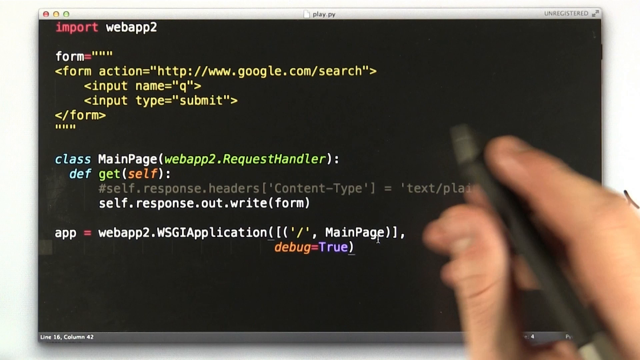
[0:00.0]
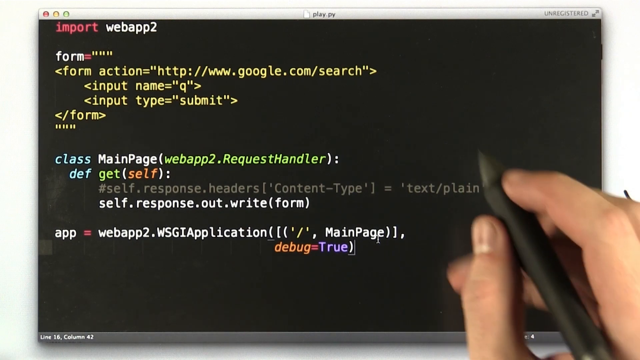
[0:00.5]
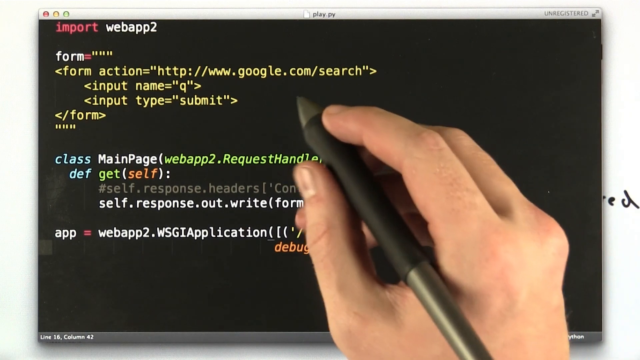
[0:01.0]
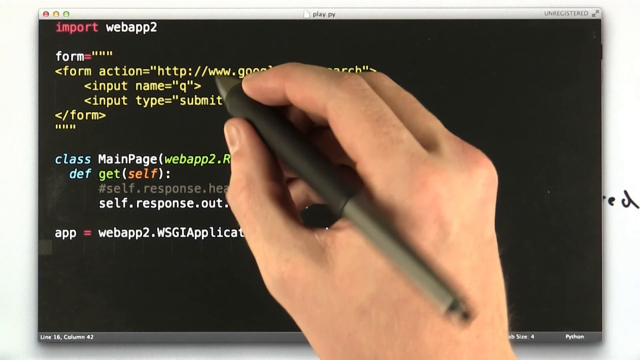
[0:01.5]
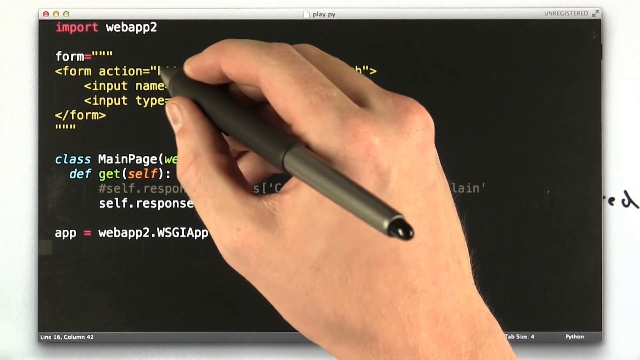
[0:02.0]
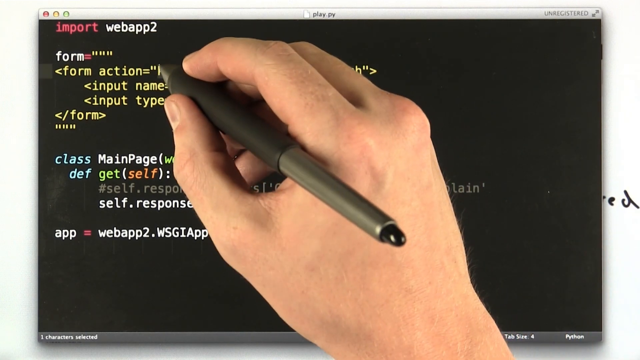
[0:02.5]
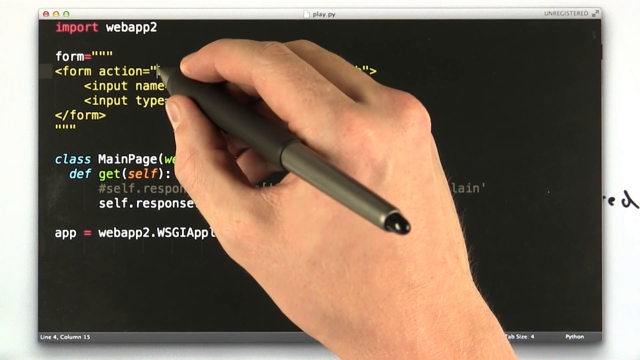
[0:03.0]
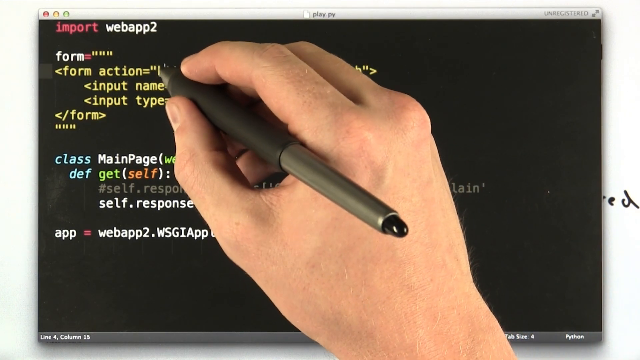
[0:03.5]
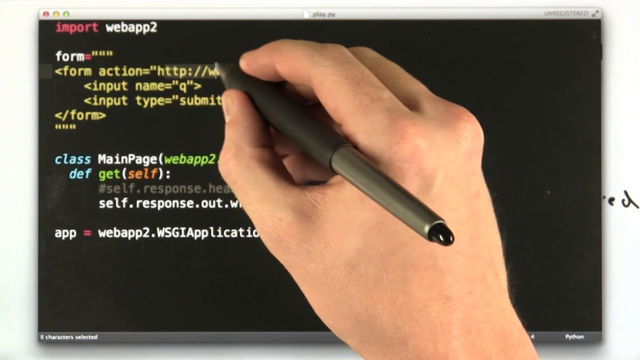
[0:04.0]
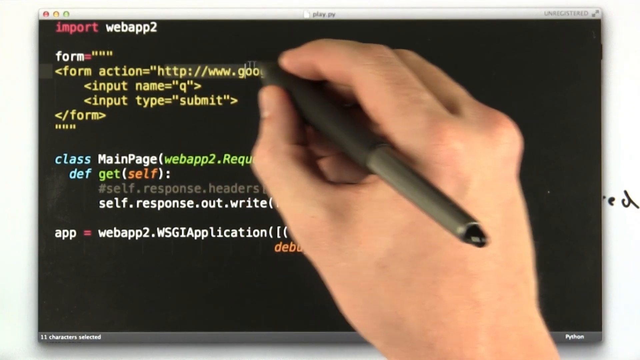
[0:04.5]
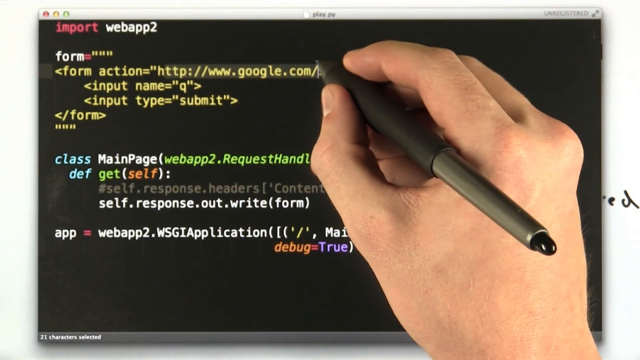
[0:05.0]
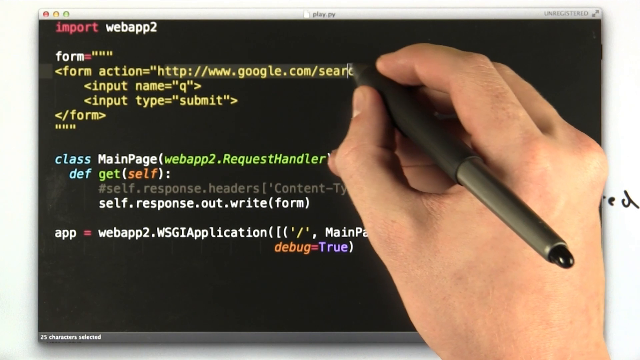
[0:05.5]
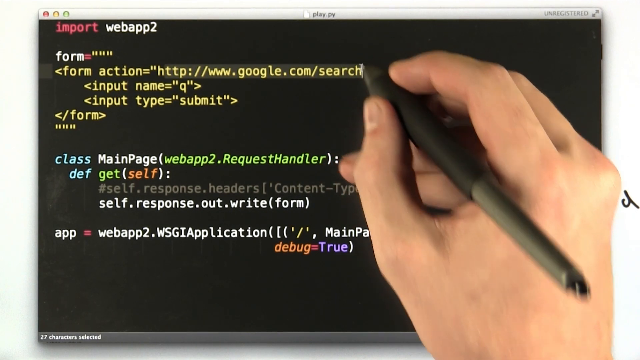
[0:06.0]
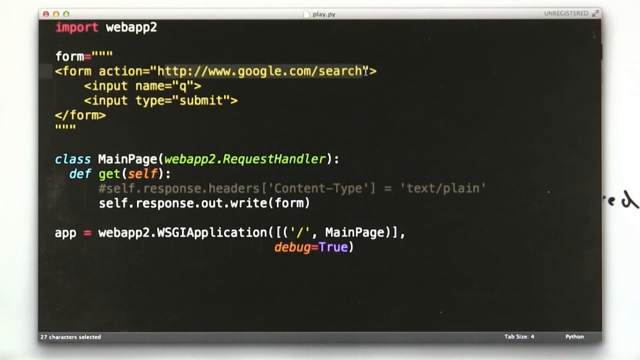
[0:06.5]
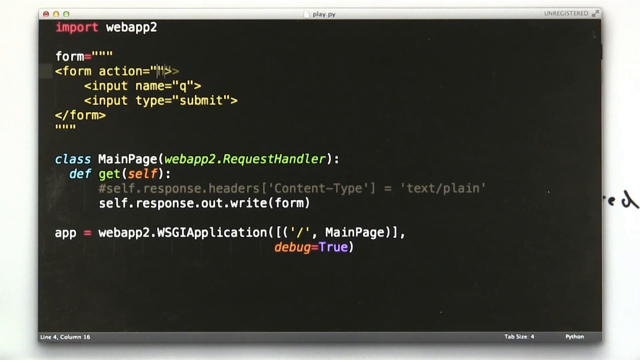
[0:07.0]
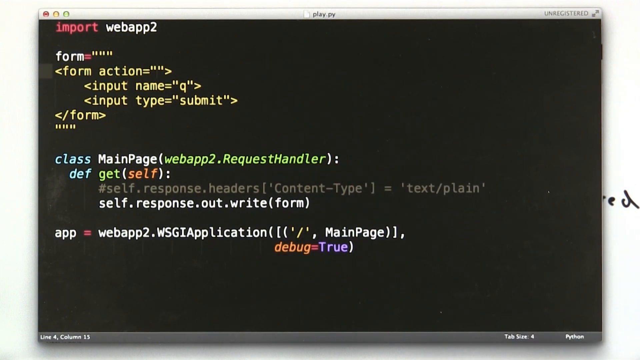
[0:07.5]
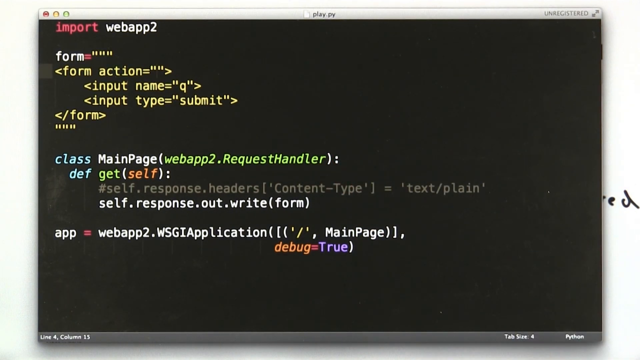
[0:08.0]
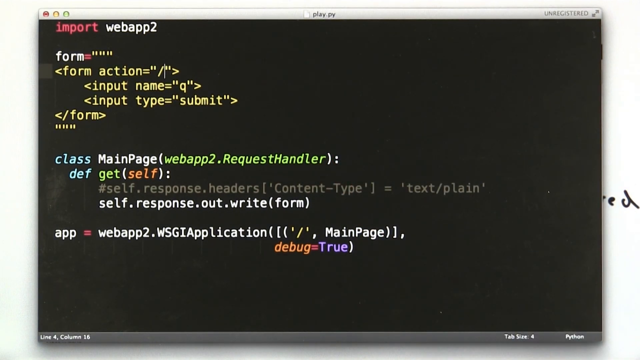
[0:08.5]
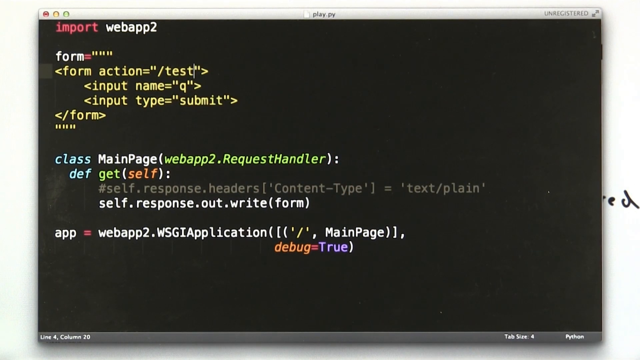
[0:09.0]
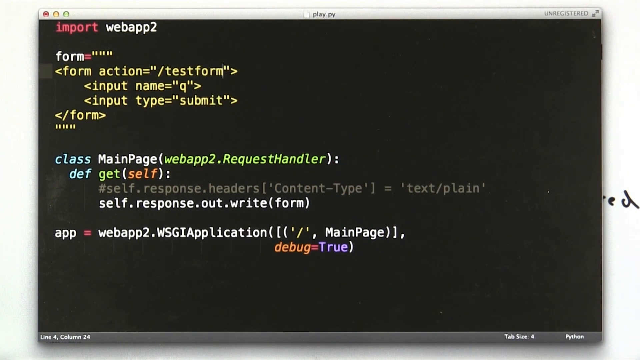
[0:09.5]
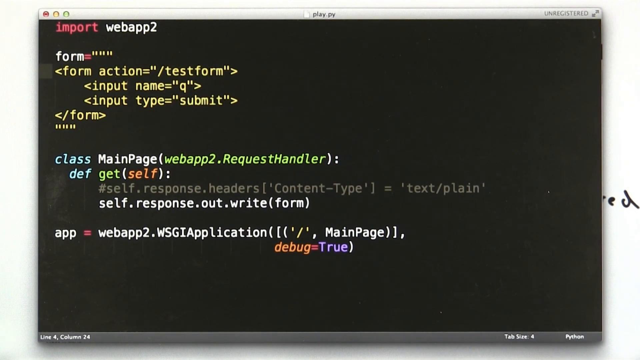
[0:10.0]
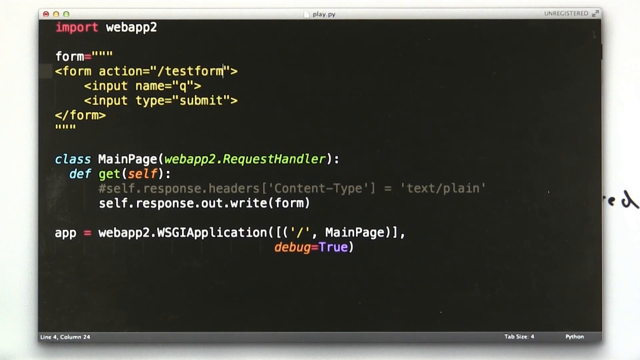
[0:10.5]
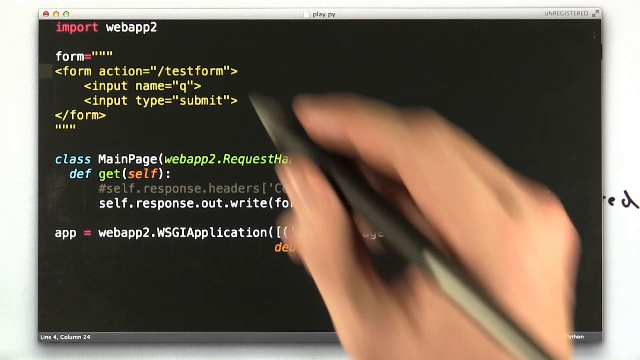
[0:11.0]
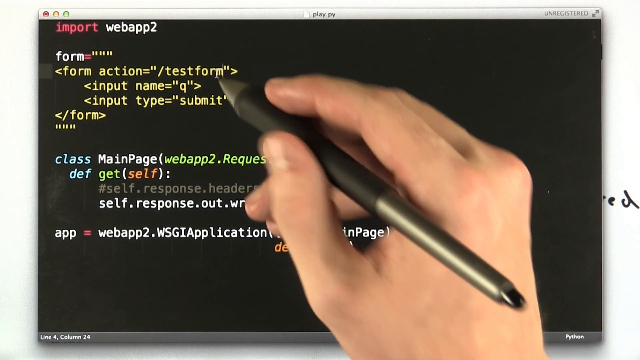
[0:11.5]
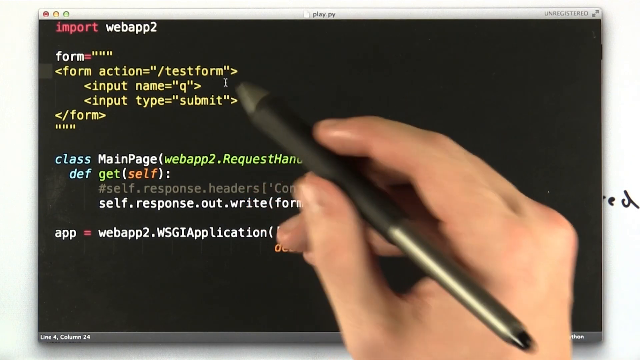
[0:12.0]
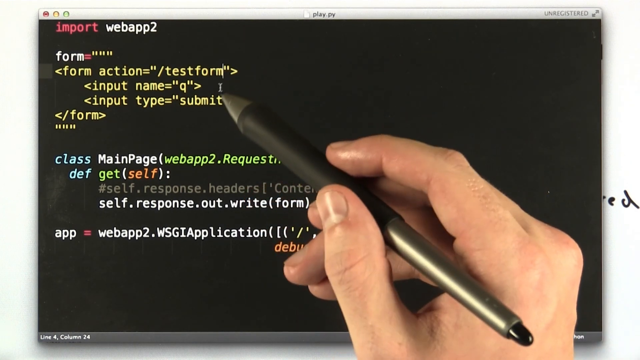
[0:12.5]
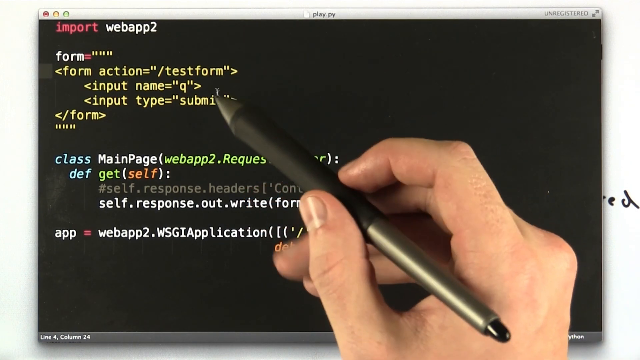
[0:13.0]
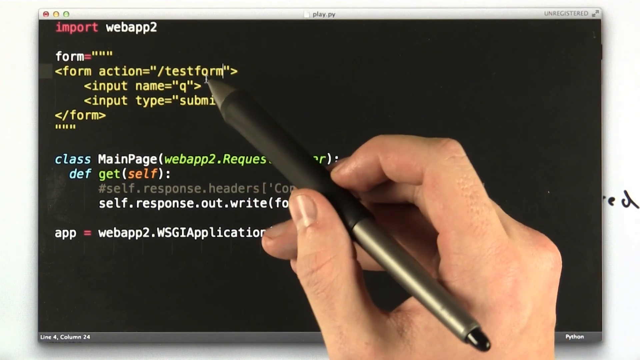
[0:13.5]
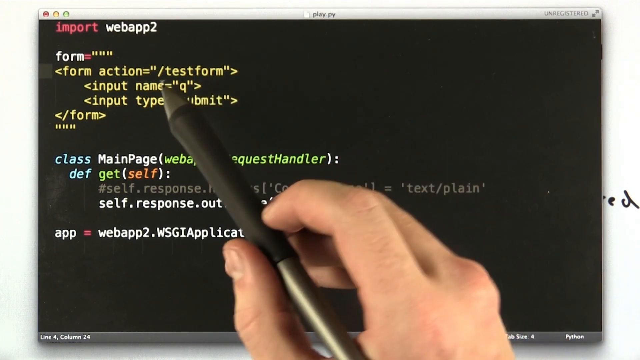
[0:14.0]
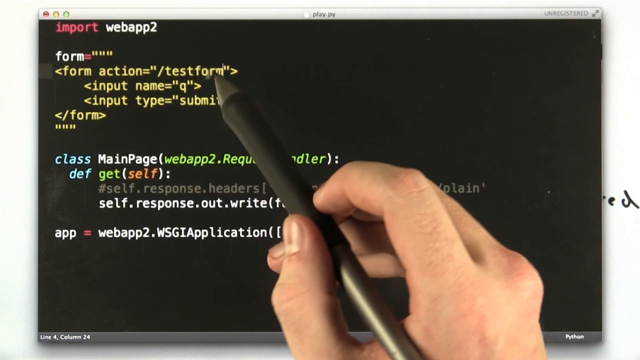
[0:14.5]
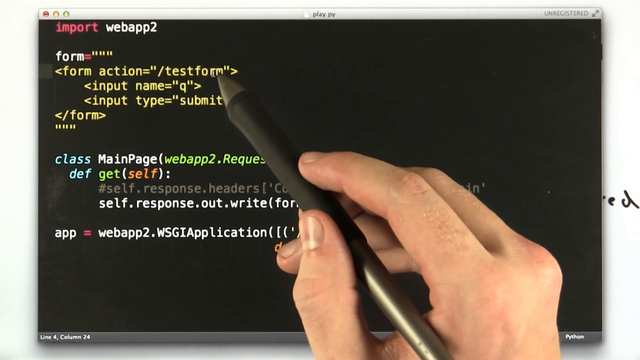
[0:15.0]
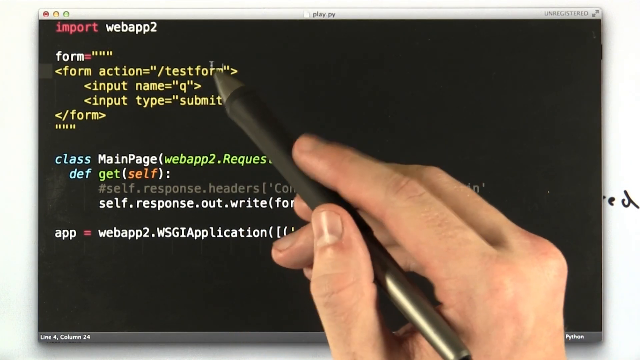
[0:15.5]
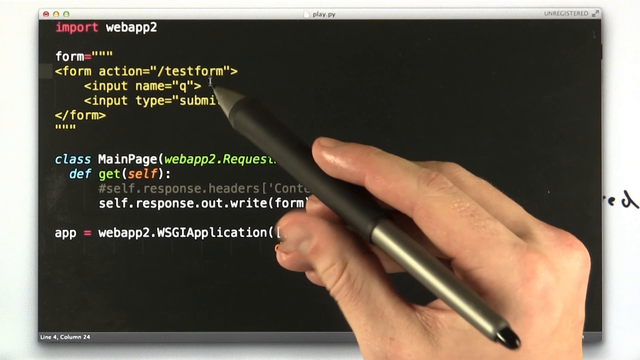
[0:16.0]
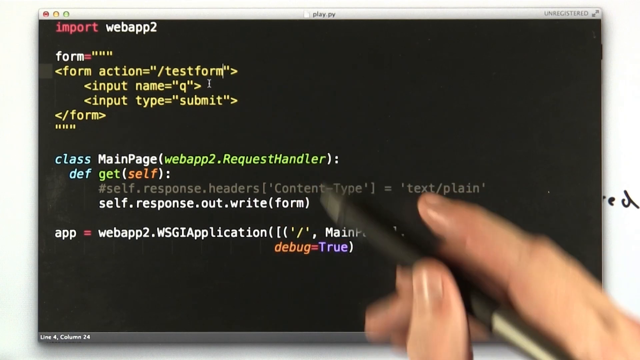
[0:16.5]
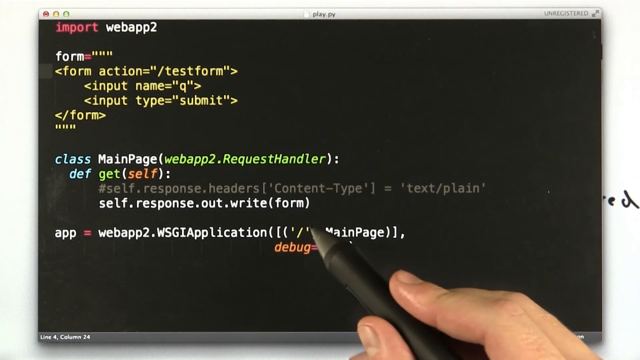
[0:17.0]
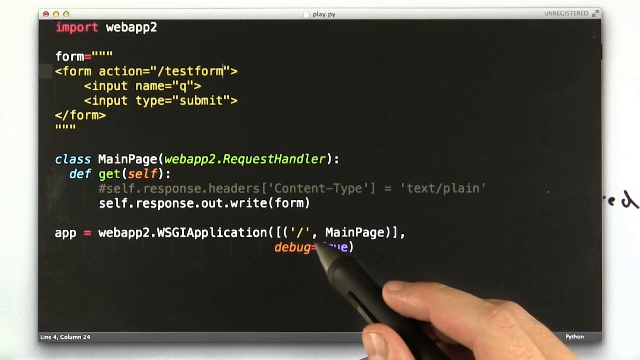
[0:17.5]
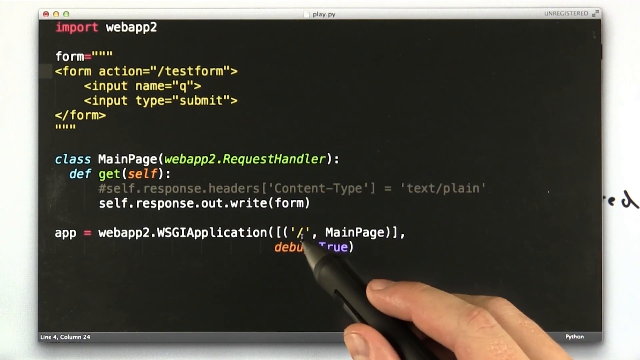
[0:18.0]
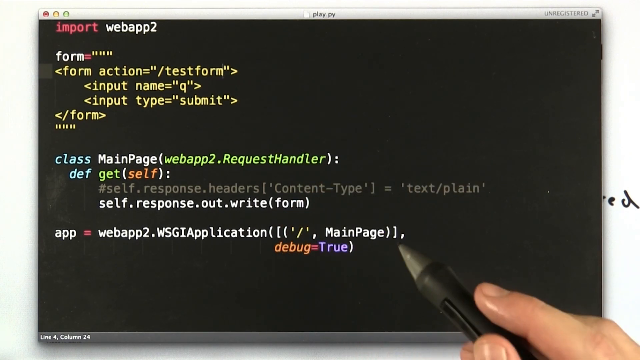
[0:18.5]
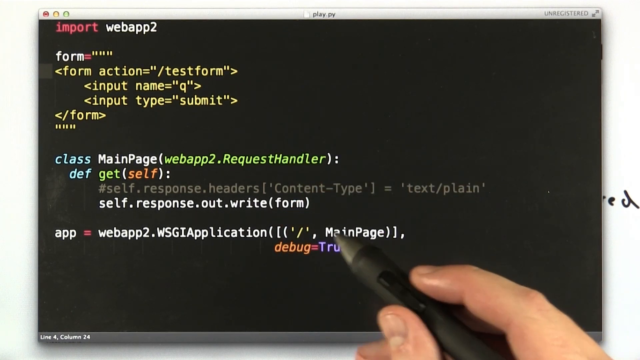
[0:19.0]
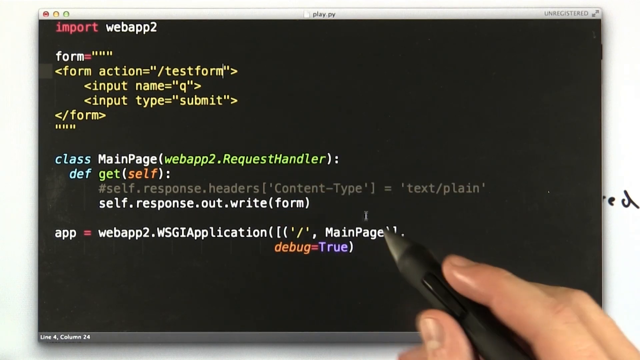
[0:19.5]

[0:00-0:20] The video opens with a screencast of a software development app showing a black screen. At the top is a header with the name of the document being edited, play.py, along with three little dots in red, yellow and green, and below that is the black screen with code on it in different colors such as yellow, red and white. The developer uses a stylus to highlight a URL, deletes it and adds "/test form" in its place. He then fidgets with the pen, which hovers over various other parts of the code. In the top right corner of the screen, the software is shown as unregistered. The code continues to be edited.